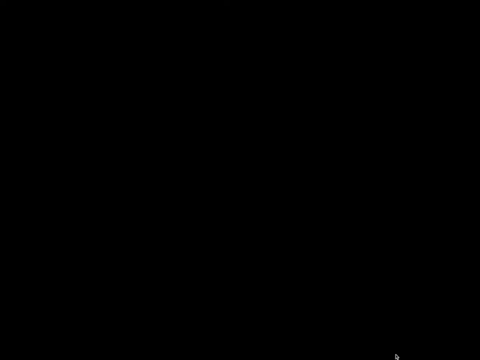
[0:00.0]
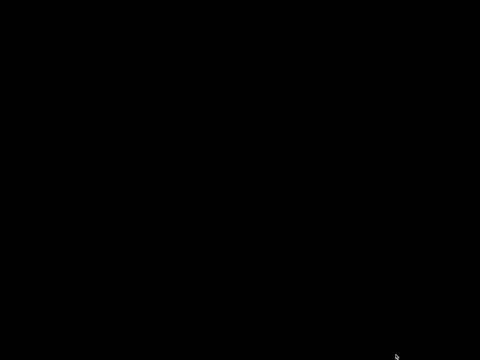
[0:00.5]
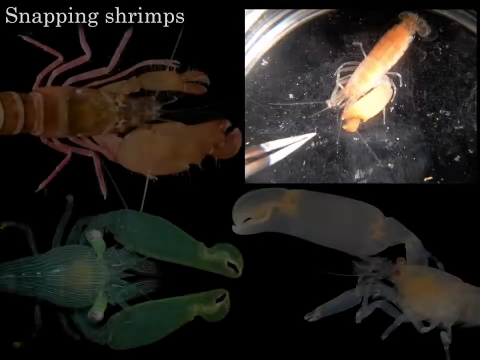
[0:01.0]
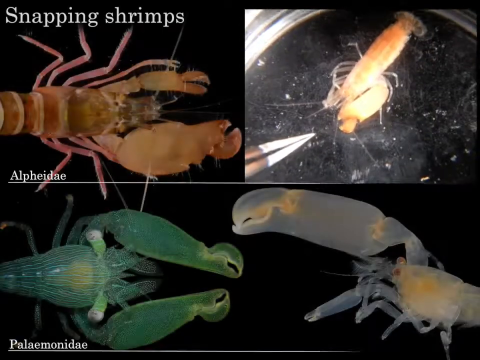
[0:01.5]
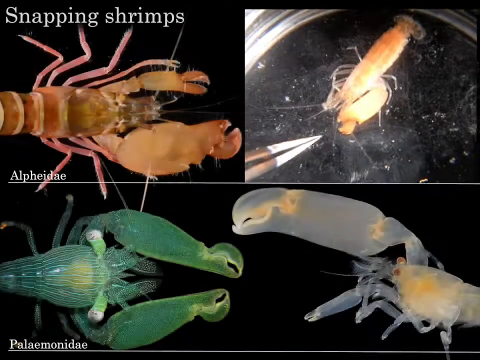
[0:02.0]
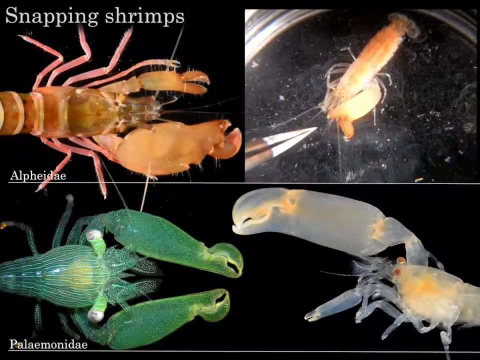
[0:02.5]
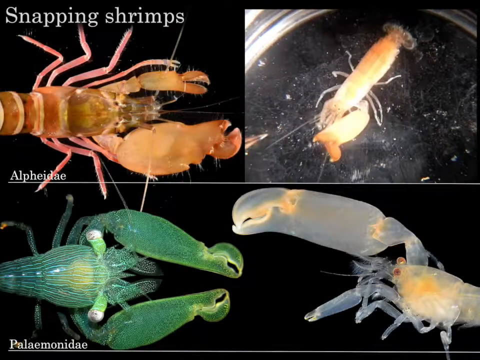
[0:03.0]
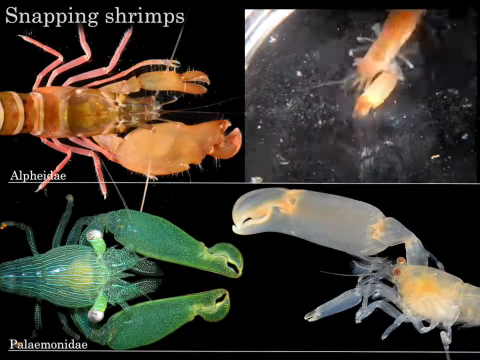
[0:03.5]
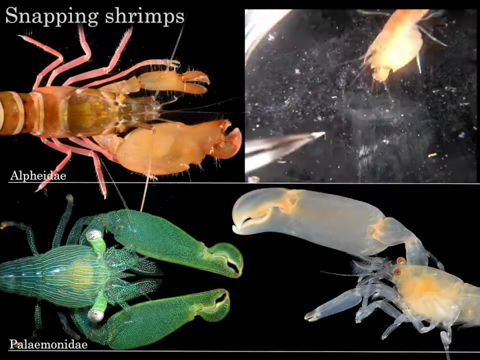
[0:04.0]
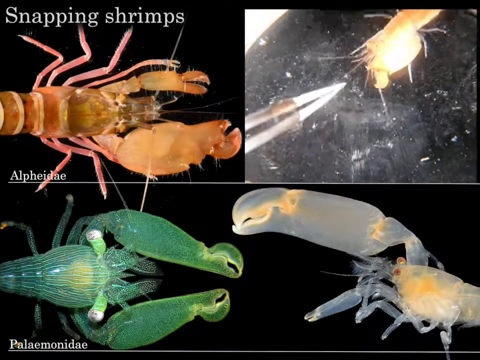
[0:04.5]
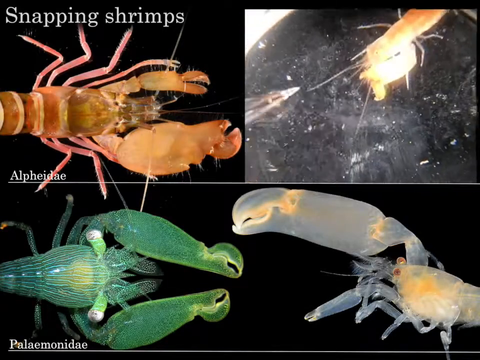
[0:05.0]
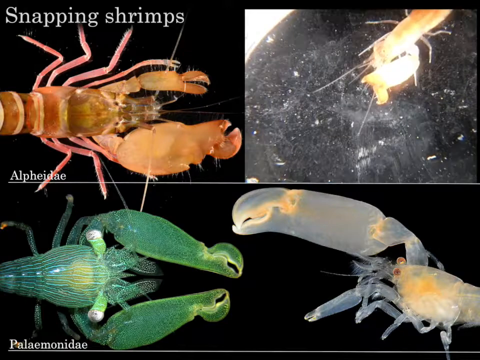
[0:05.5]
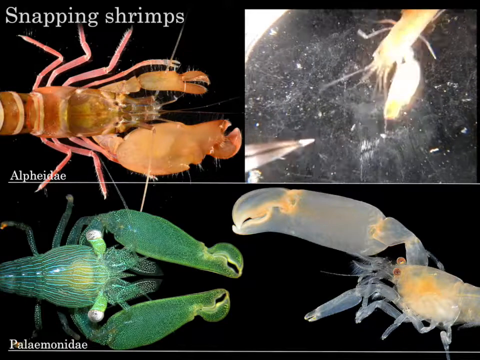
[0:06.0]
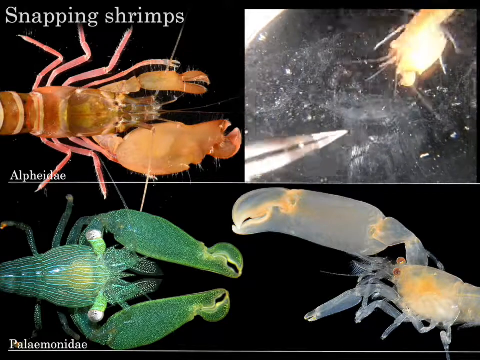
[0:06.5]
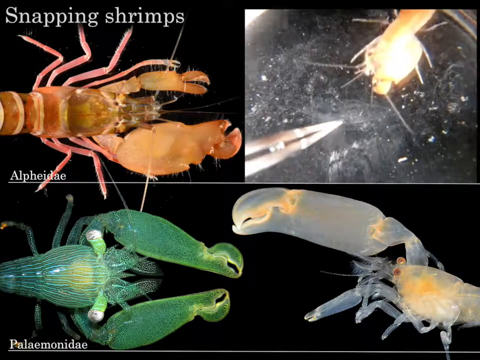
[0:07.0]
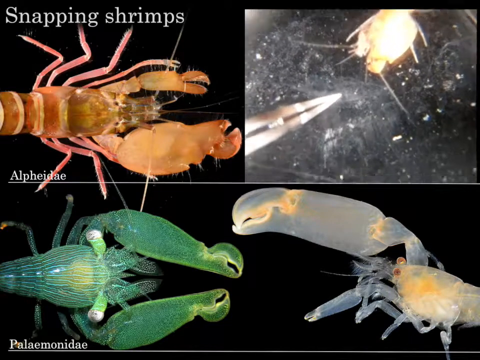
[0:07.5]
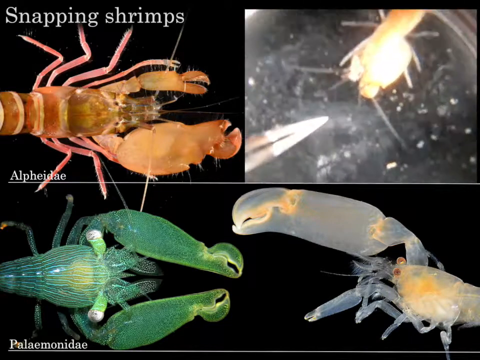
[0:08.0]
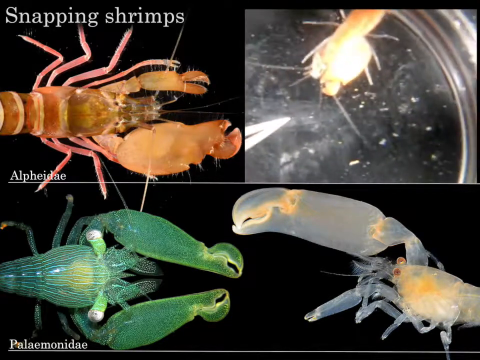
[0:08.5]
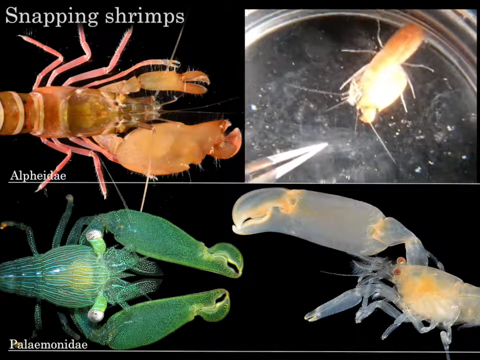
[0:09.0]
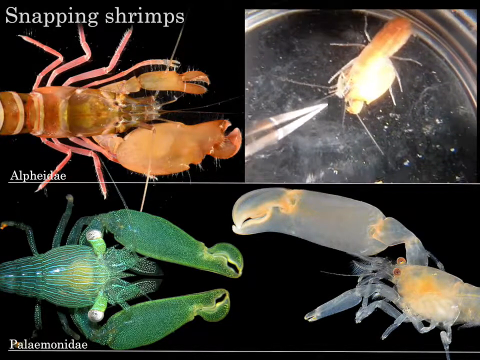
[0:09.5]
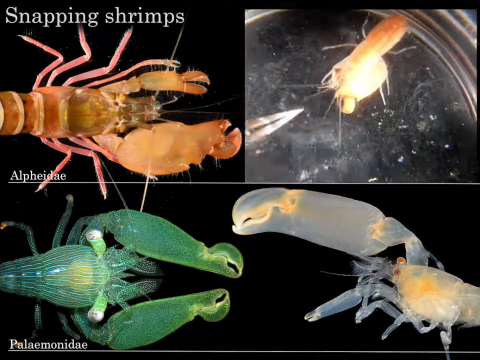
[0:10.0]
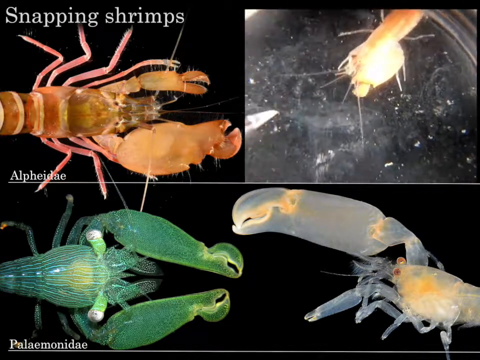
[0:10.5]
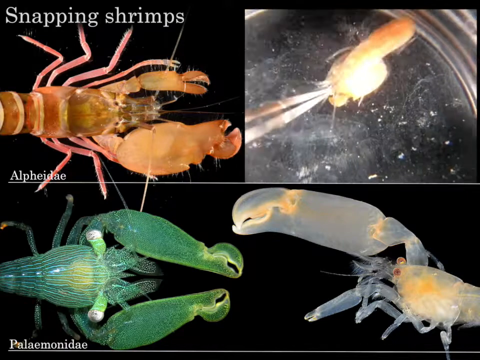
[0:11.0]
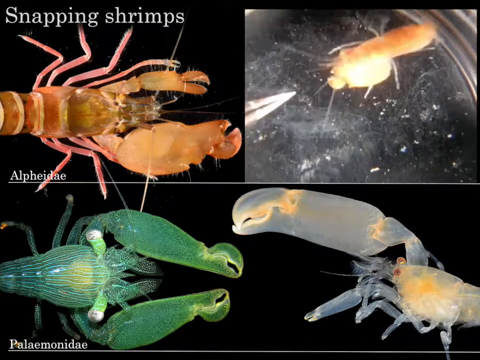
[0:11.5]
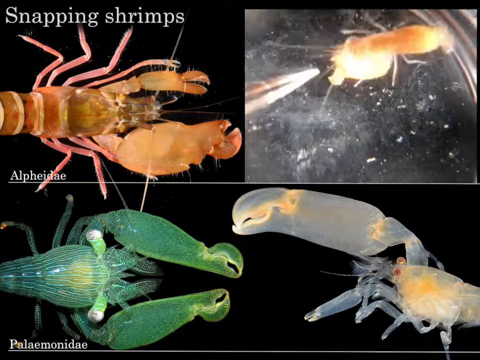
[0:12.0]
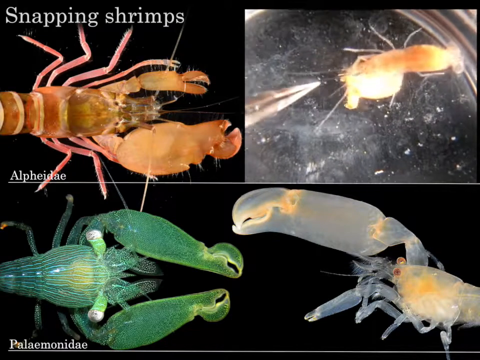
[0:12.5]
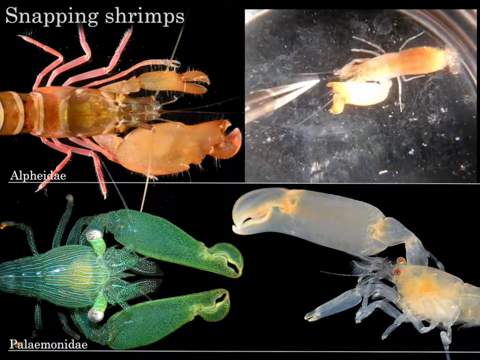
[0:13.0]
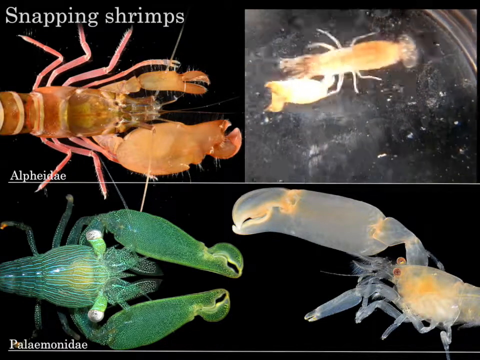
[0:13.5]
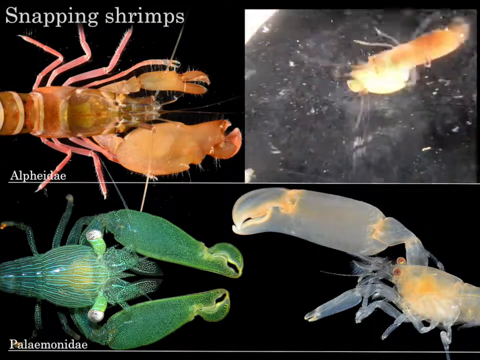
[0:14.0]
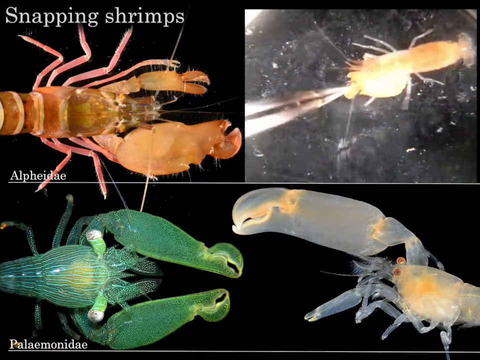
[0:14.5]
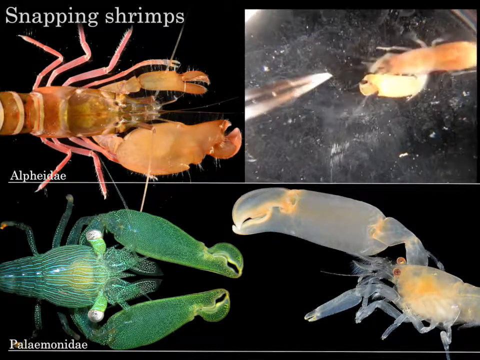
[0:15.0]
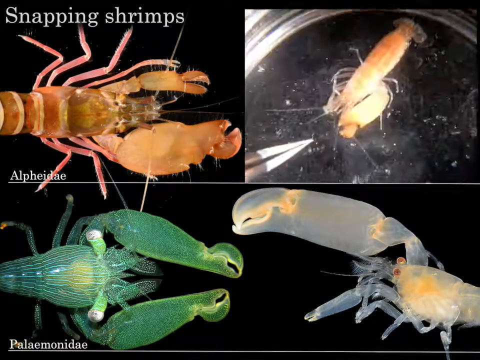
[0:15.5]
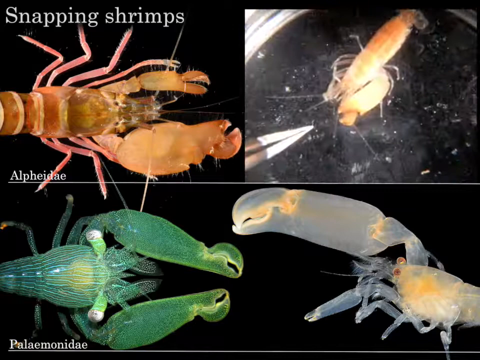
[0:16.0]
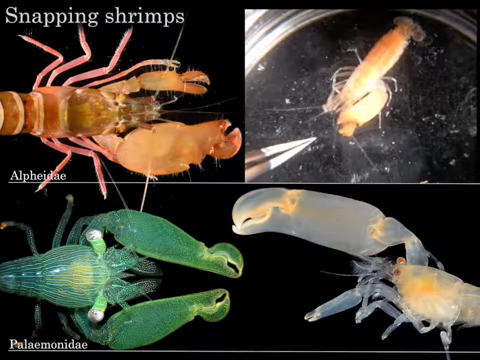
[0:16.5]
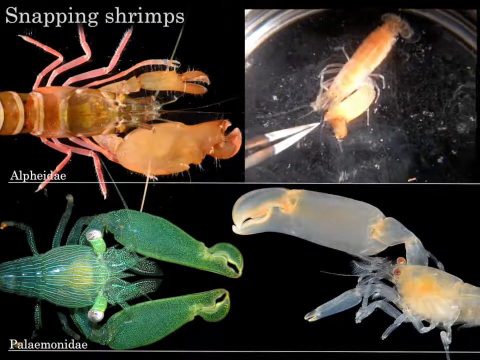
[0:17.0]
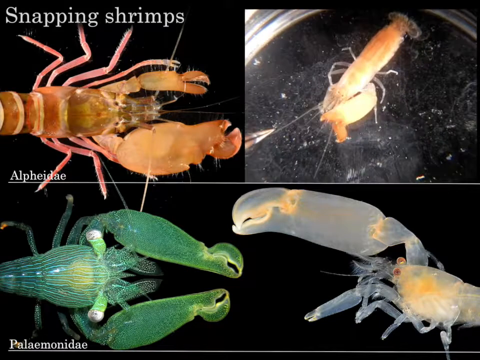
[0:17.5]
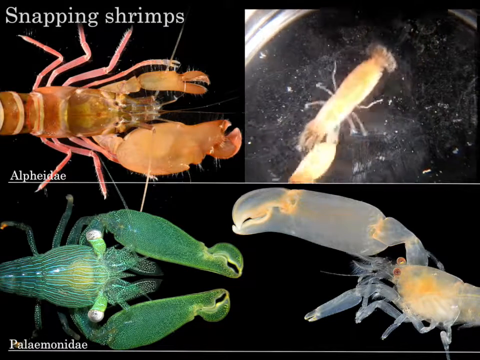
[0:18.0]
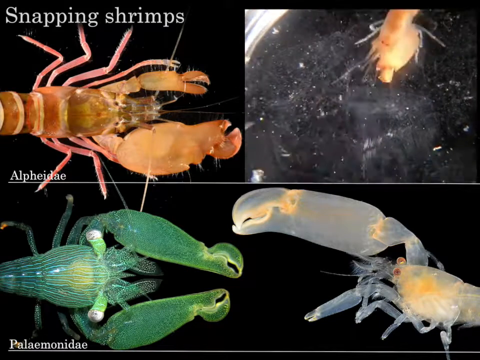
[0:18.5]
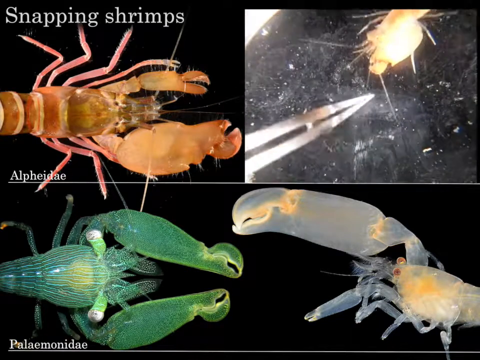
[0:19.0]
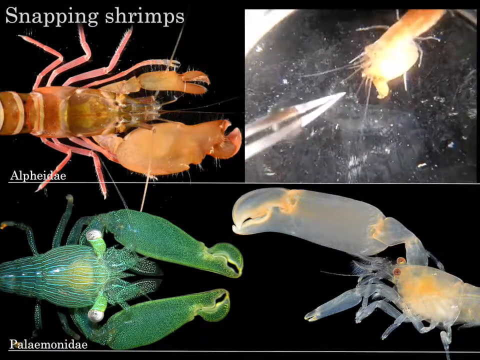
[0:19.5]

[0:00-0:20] The video is about snapping shrimps, which look like crawdads except that the claws at the end are really small. The screen is divided into four images of equal size. In the top right is a shrimp in water; it is red, its head faces down to the left, and it has a claw only on the side that is down to the right. It has a glowing light on its head and on its claw. On the left side is a closeup of one with its head facing left and its tail off the left side. Its bottom claw is really big, with the pinchers just at the very edge, while the other claw is shorter and thinner. It has eight legs that are pinkish in color, and its body and claw are orange. Below that is one with equal-size claws, its head to the right and its tail off the screen; it is a greenish color. The one in the bottom right has a huge top claw about as big as its body, while the other claw is really small; its head is to the left and its tail is off the right side. In the top left, tweezers come in, grab hold of the crayfish's antenna and pull it, and it snaps back and moves away. It reaches out with its claw as if snapping at the tweezers. The tweezers go in closer, trying to grab it again. It backs away to the right, charges forward with its claw out, and backs away again. It then opens its claw wide and charges toward the tweezers.